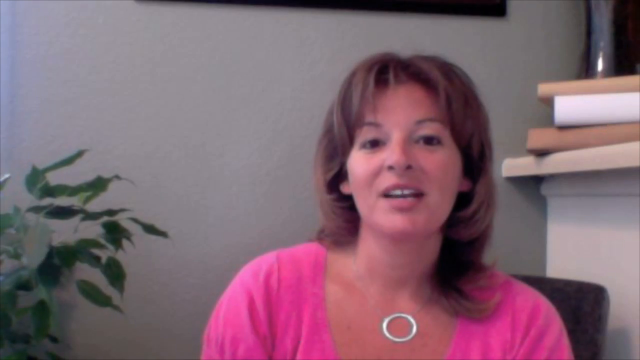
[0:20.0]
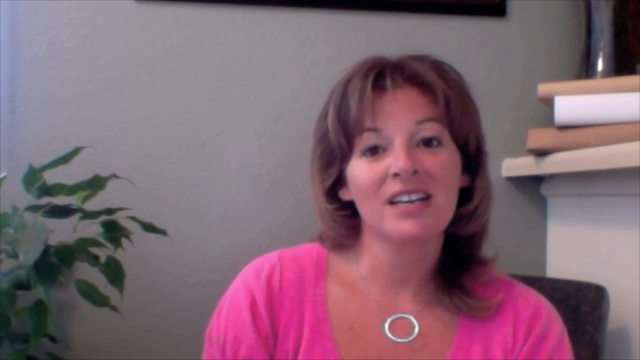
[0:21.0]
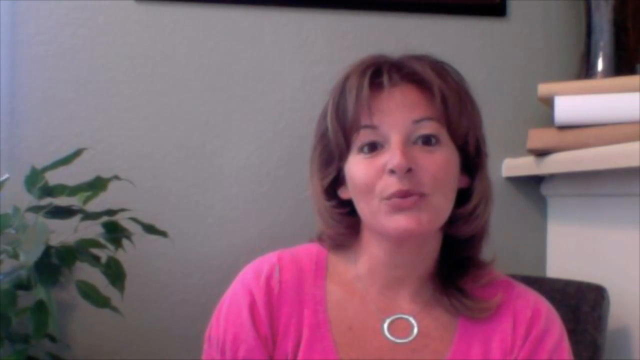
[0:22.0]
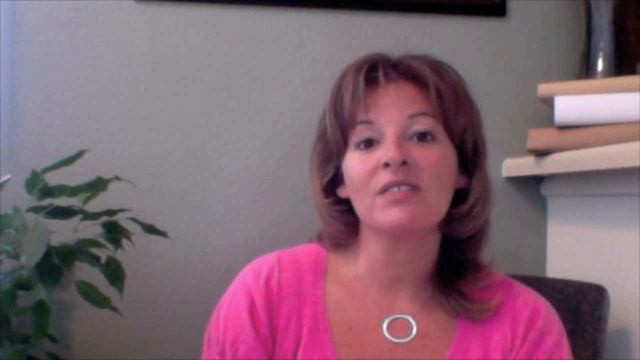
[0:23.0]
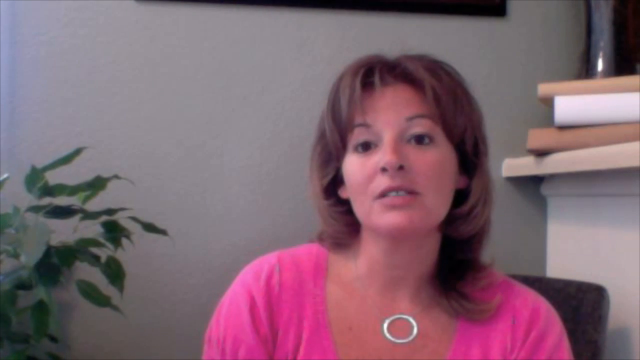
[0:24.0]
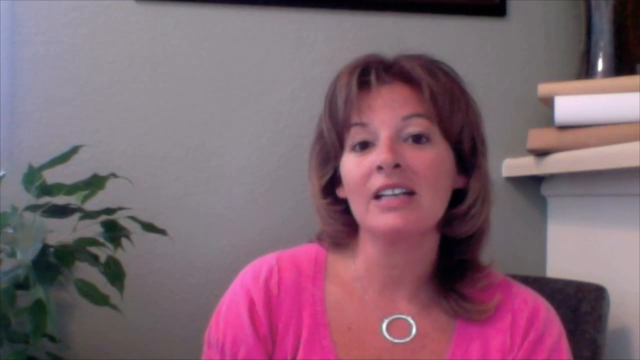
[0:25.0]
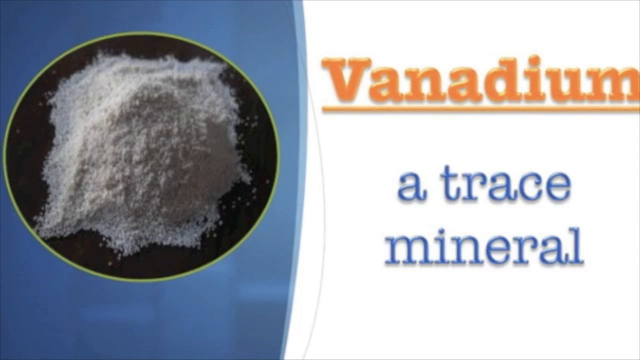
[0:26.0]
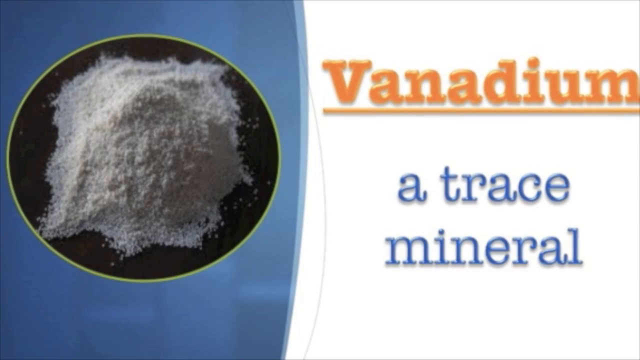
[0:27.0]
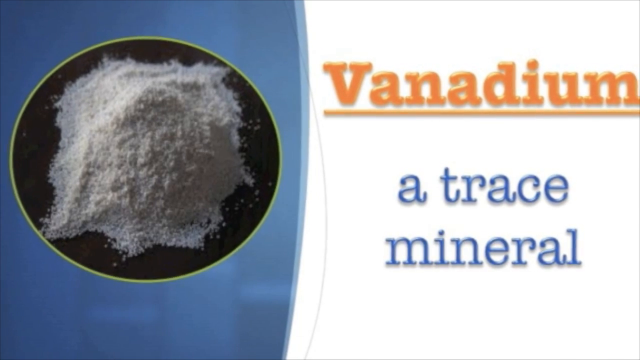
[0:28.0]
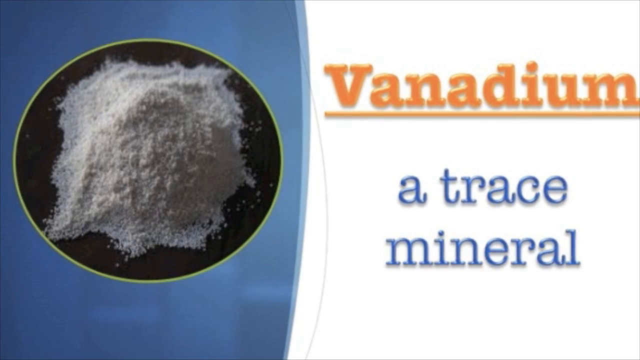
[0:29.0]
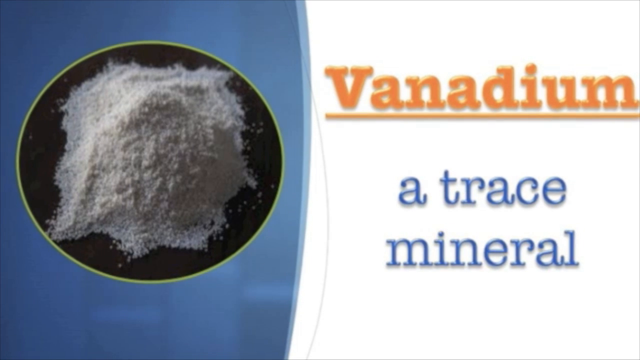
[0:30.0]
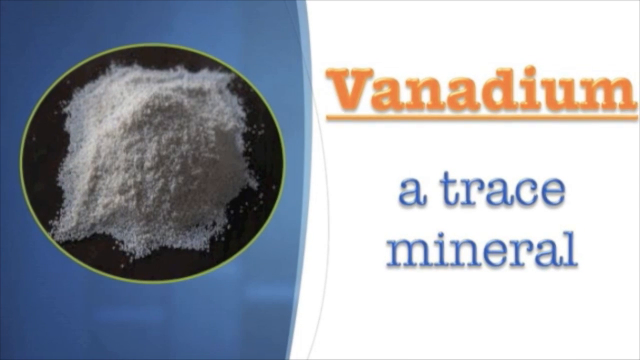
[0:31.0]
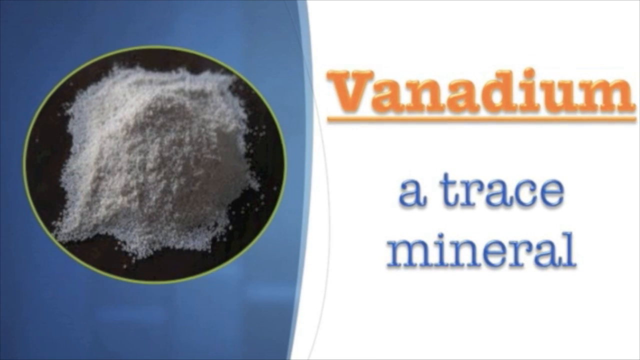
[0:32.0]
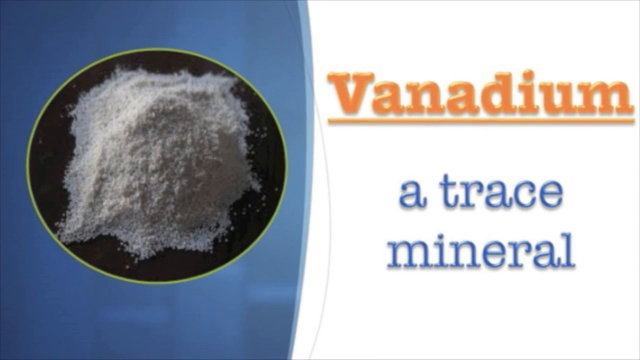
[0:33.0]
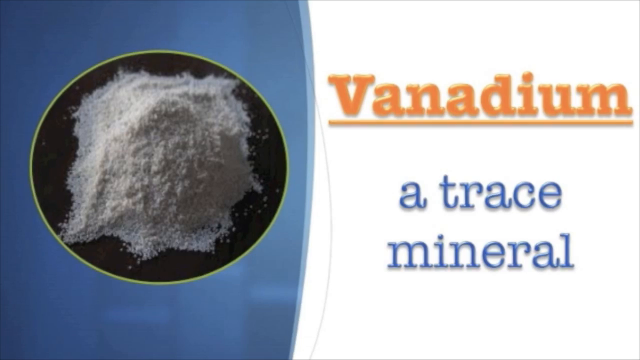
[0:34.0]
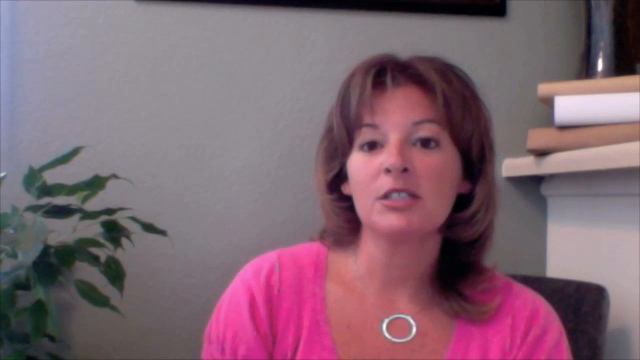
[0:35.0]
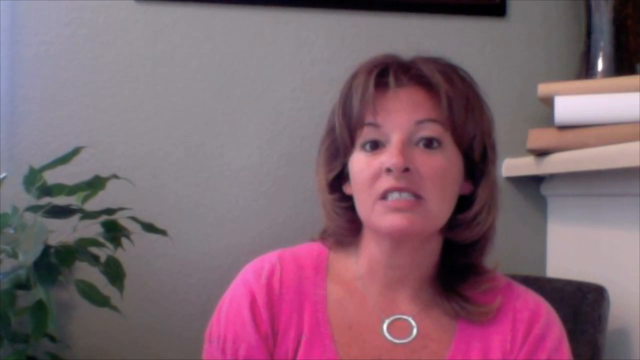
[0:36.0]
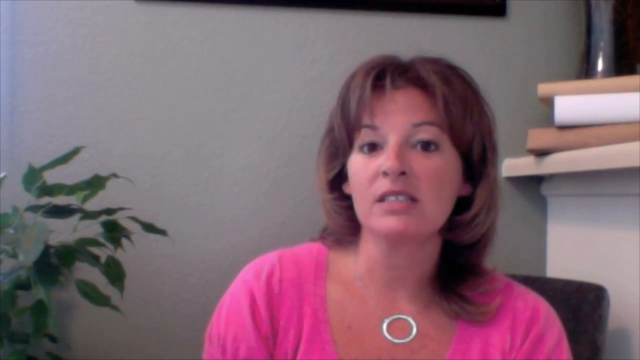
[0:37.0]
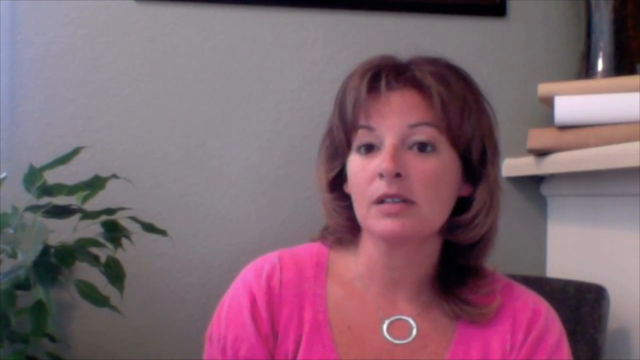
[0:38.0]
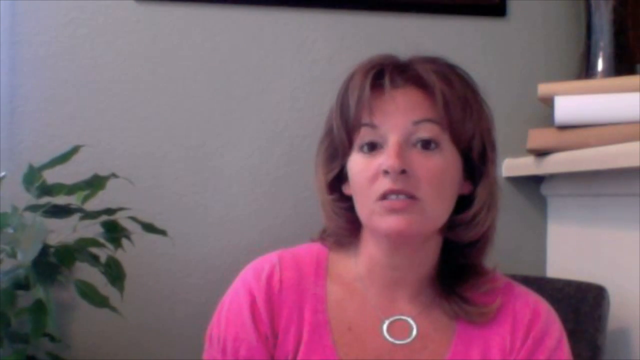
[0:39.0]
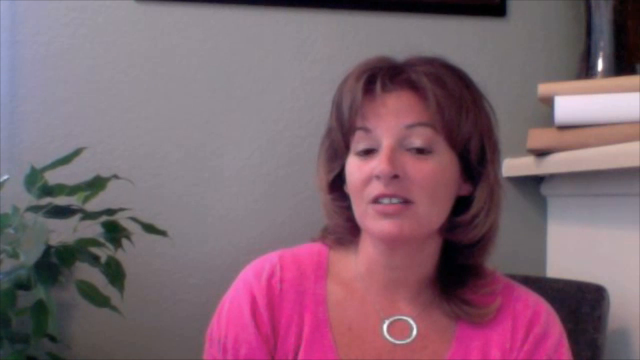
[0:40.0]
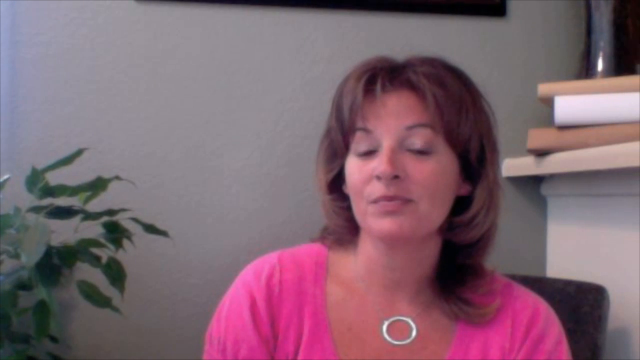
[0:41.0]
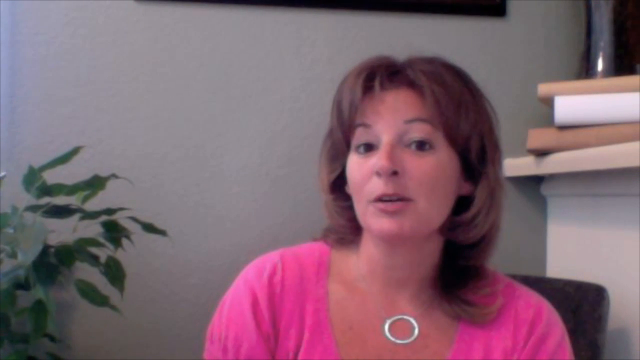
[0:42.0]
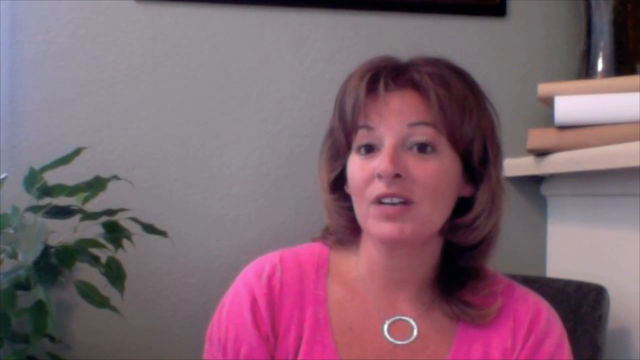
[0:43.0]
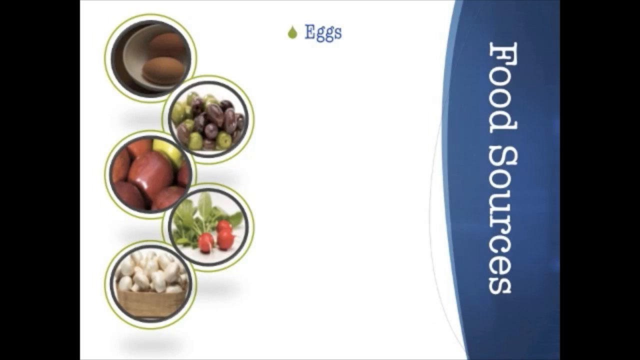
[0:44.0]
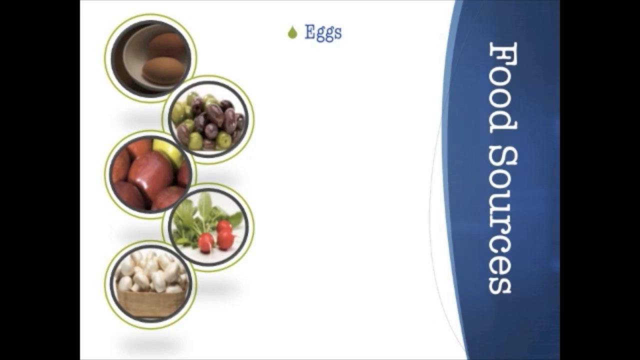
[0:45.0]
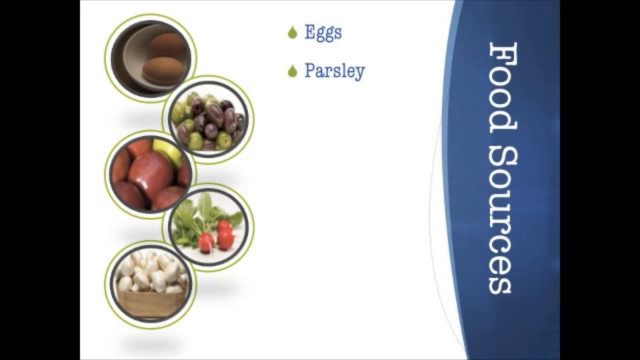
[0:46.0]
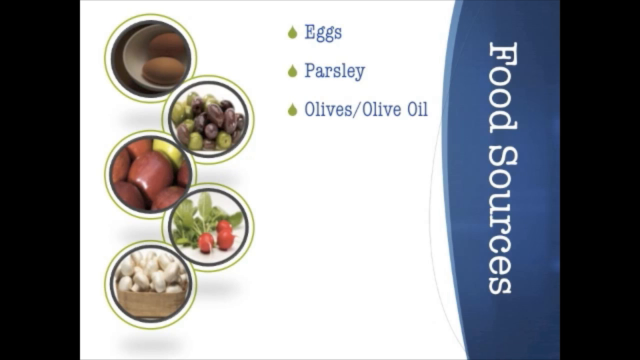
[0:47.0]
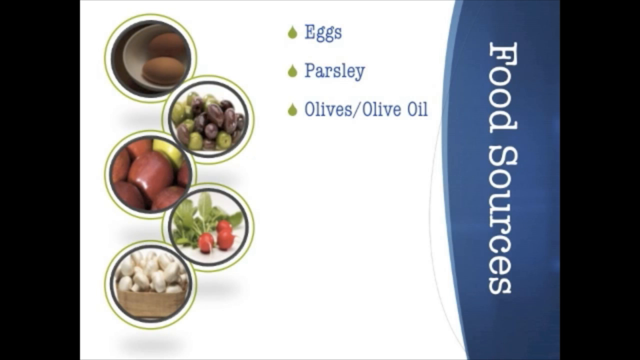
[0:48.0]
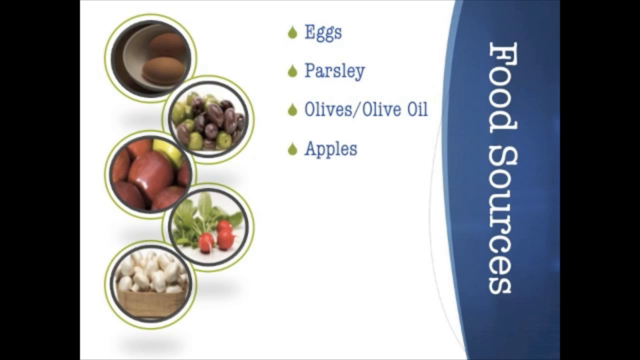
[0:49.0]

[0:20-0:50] The scene with the woman continues. Behind her is possibly a bookshelf with some decorations on top; it is white and holds what may be books in brown, white and brown. The background seems to have a greenish tint, and there is a plant to her left and a picture frame above her. Air movement makes the plant's leaves move. While she talks, a slide appears showing a powder in the middle of a circle: the background behind the powder is black, the circle looks like a faded yellow, and beyond it the screen is blue. On the right-hand side it says "Vandalinium trace mineral," with "Vandalinium" in orange and "trace mineral" in blue font on white. It returns to her talking; she wears a necklace with a circle, or something circular on her chest. After she talks more, another slide appears with pictures of food, with eggs at the top left, and the title "food sources." It shows eggs and grapes and includes olive oil, with labels for the pictures; it passes quickly.